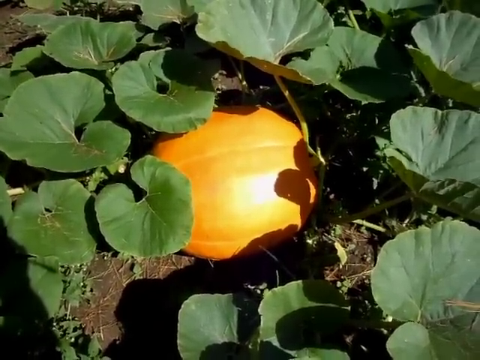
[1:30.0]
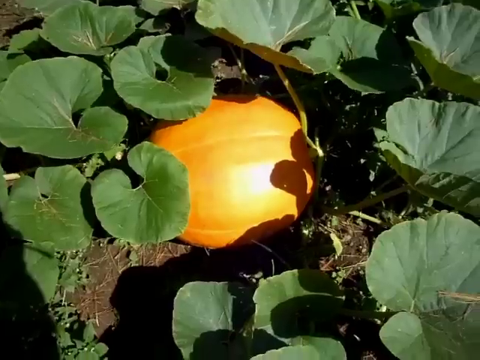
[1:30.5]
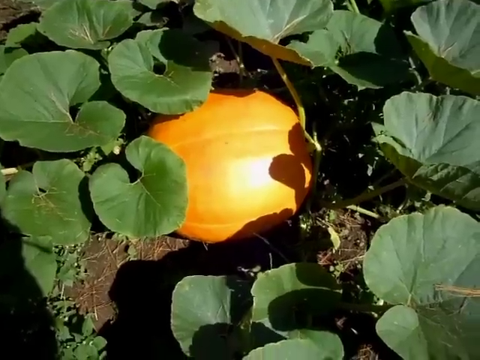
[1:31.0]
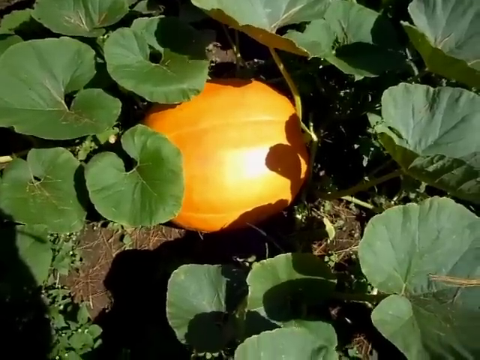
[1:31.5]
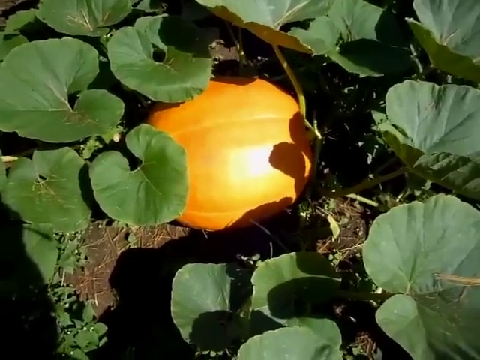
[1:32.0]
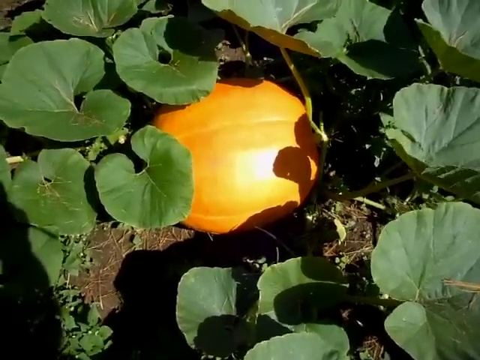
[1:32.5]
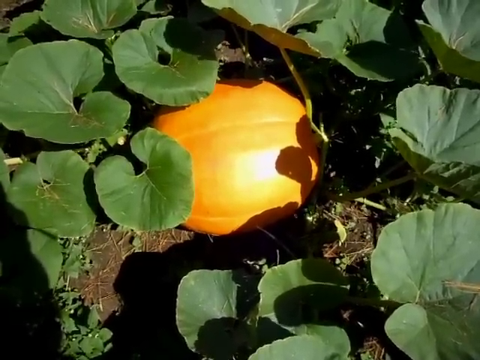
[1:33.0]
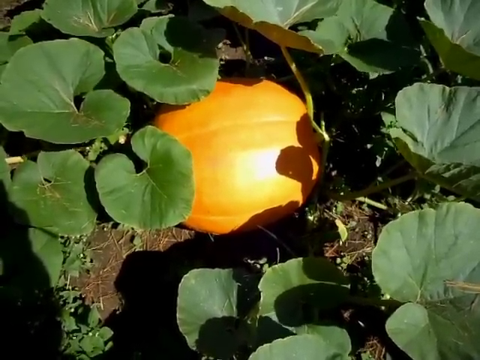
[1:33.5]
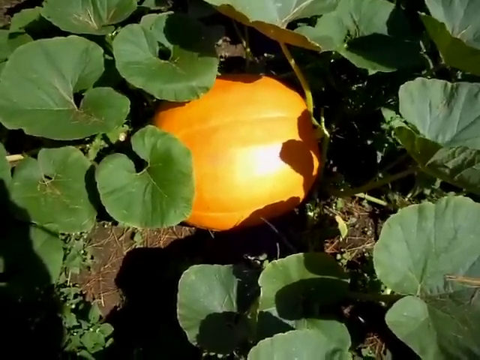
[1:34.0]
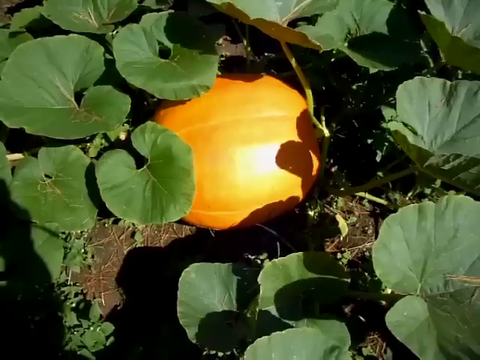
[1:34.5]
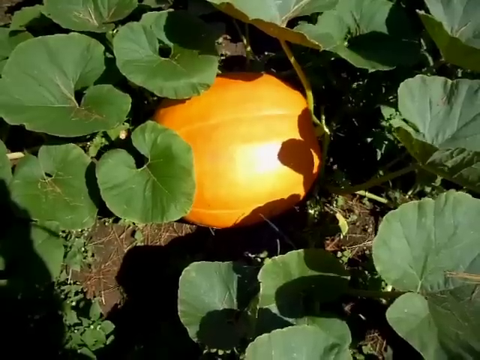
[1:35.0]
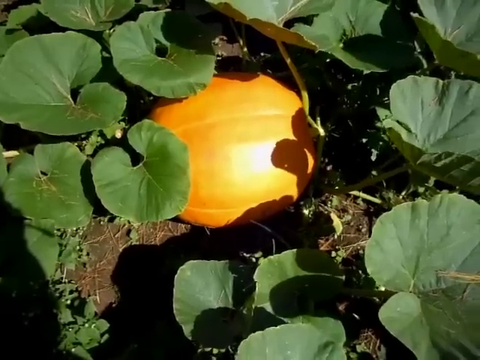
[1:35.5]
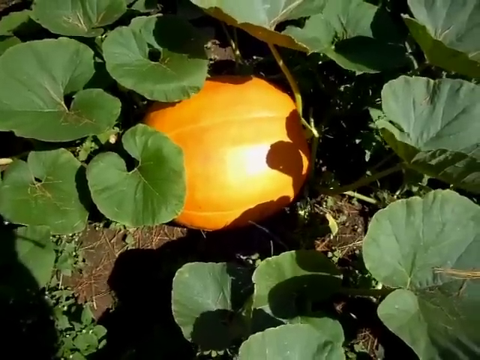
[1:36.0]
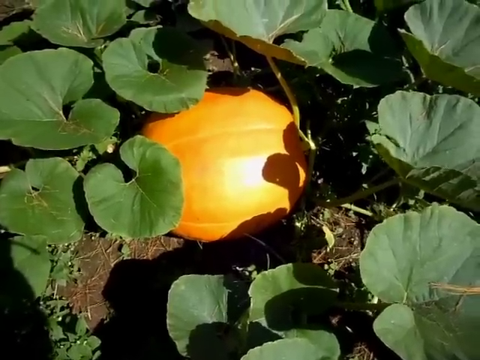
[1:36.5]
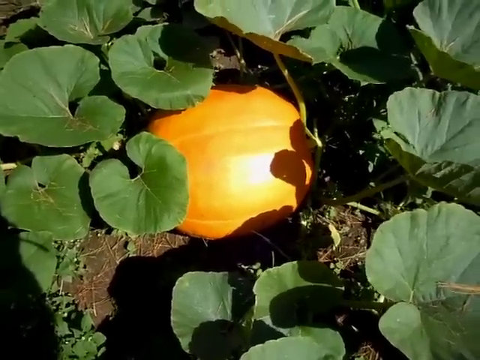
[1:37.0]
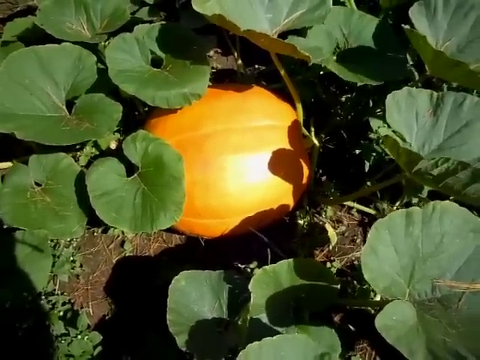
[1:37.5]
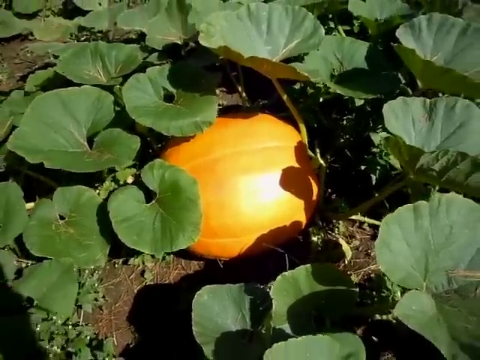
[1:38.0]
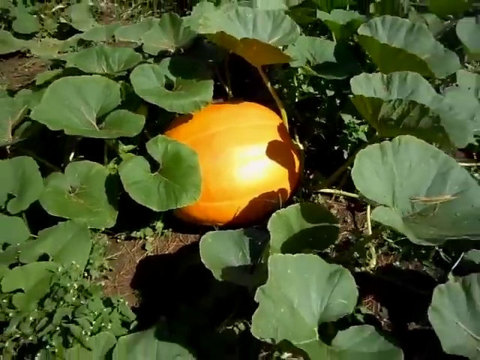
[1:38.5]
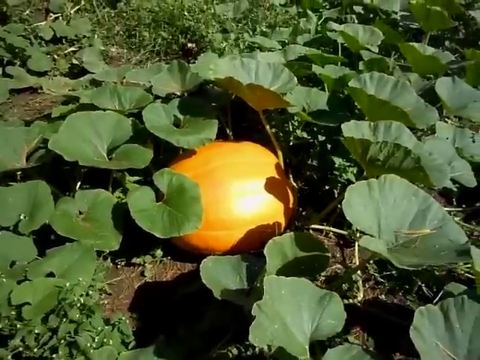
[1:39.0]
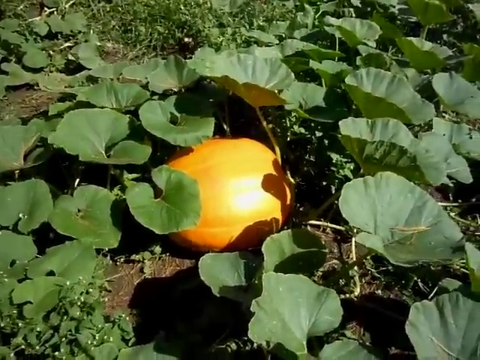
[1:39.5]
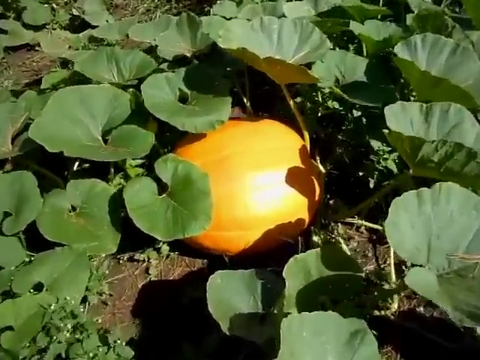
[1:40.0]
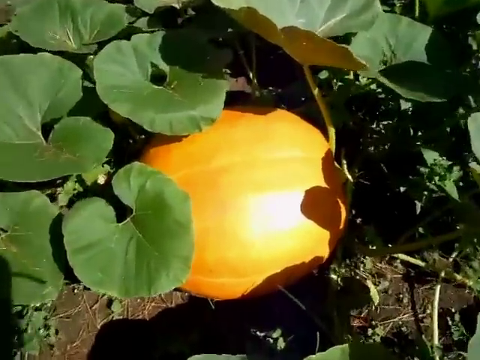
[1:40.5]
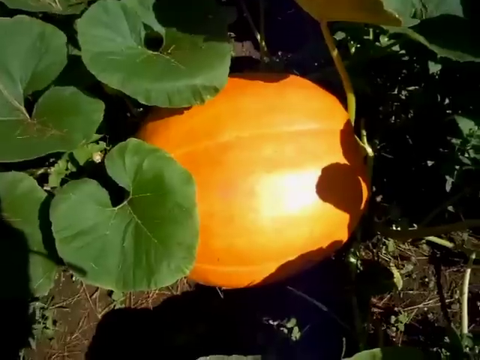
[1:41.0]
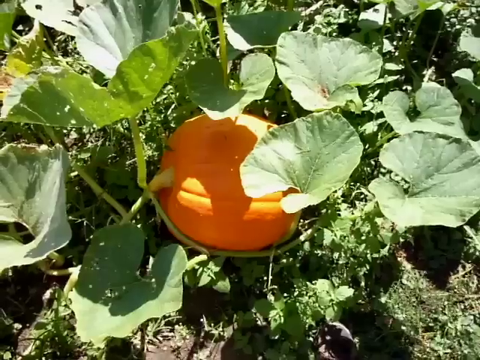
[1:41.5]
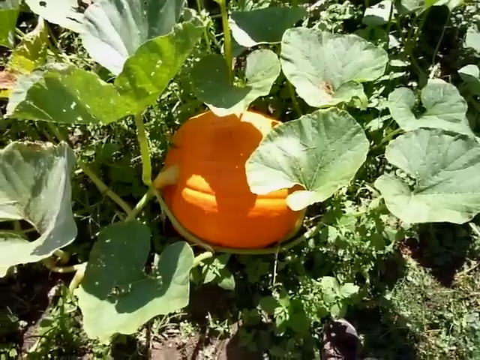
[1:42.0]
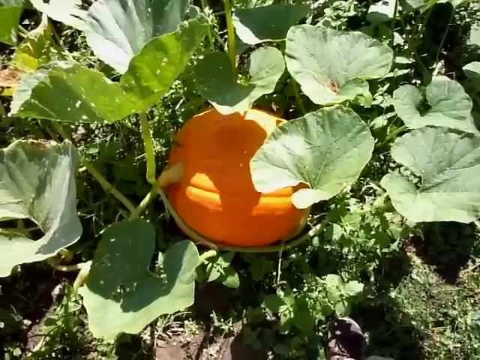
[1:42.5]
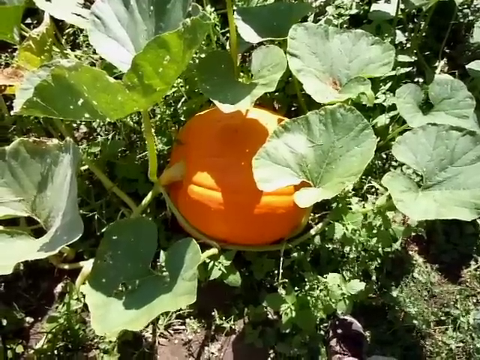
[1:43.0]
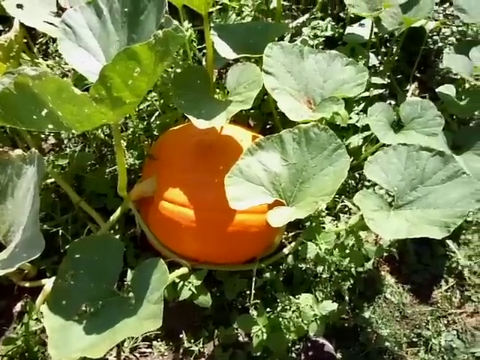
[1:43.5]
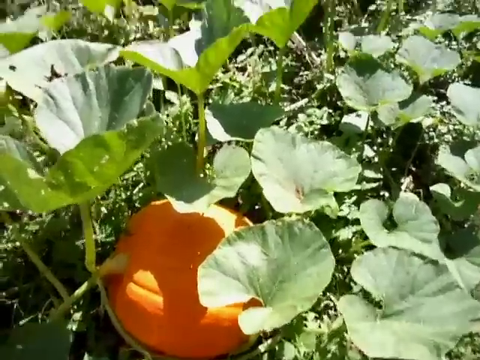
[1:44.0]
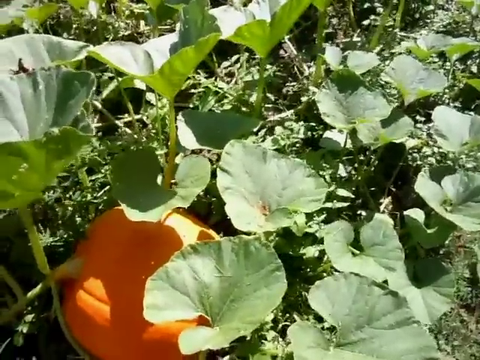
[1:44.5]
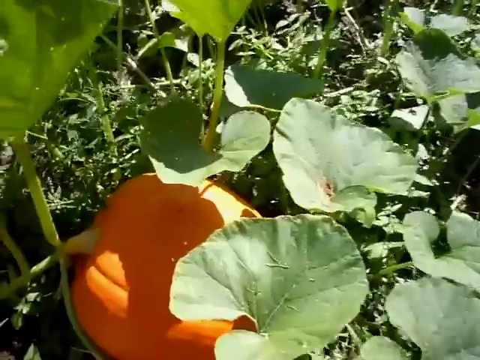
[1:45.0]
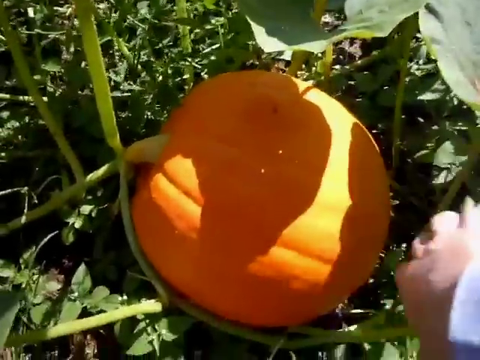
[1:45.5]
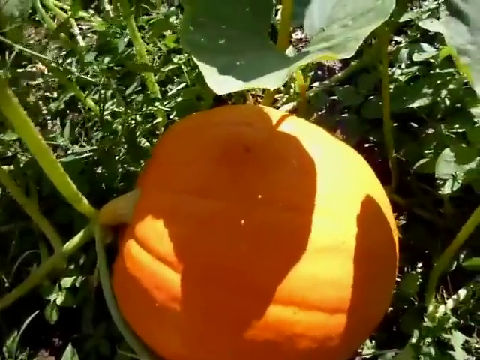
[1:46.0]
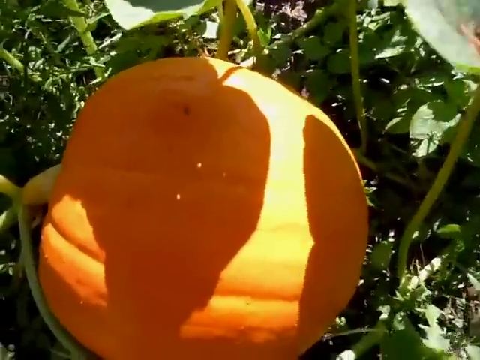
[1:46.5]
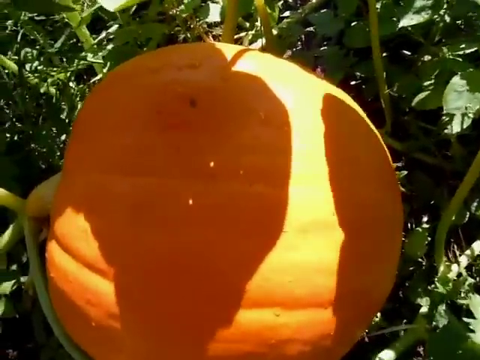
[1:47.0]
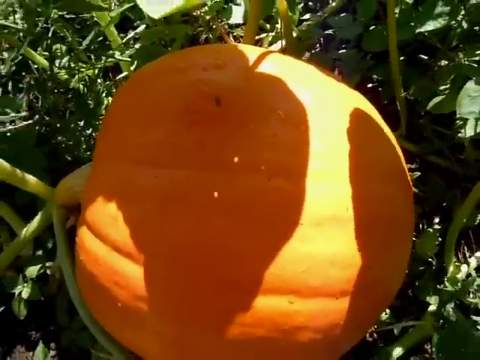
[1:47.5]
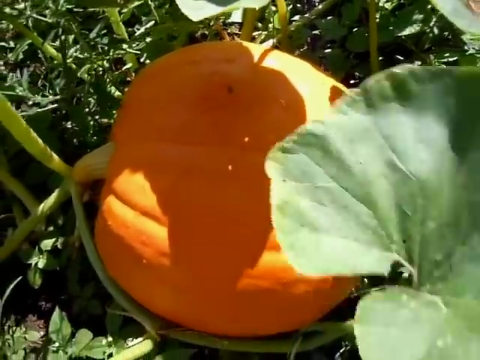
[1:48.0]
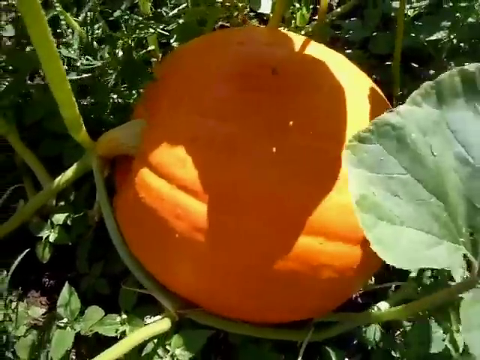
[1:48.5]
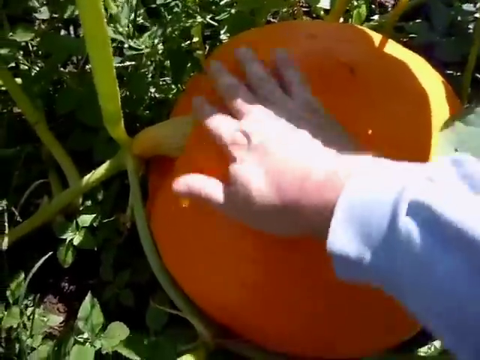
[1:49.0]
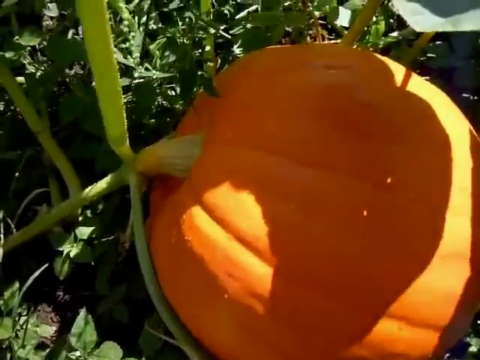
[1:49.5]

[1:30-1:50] A single pumpkin is in the center of the screen, its stem to the right and still attached to the vine. Leaves stand upright on long stems and are uniformly green and healthy looking. Leaf shadows are cast upon the pumpkin because the sunlight is behind the leaves, which are moving in the wind. The view stays on the pumpkin for a few moments, then pulls back away from it and moves closer again. A second pumpkin follows, with its stem pointing toward the left side of the screen and also still attached to its vine. Tall, healthy leaves surround it. The camera zooms in on the pumpkin, and someone pushes a leaf back with their right hand. In the close-up of the pumpkin, there is a mark in the upper left quadrant that is darker than the rest of the pumpkin. With their right hand, the person pushes away the mark.